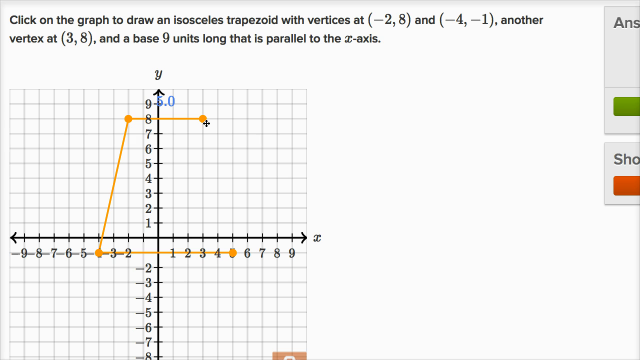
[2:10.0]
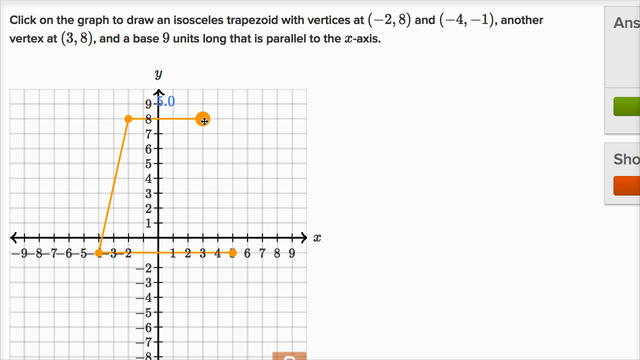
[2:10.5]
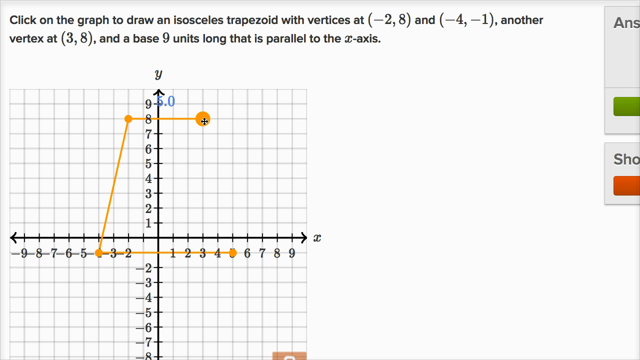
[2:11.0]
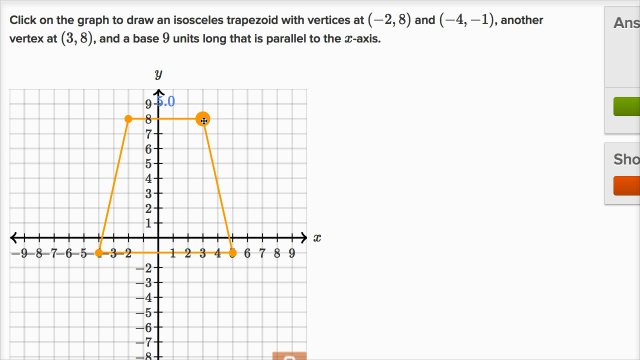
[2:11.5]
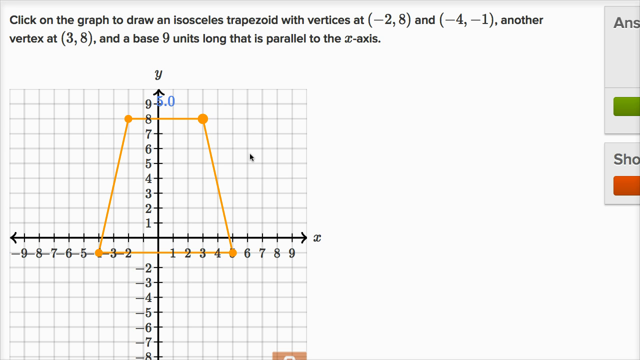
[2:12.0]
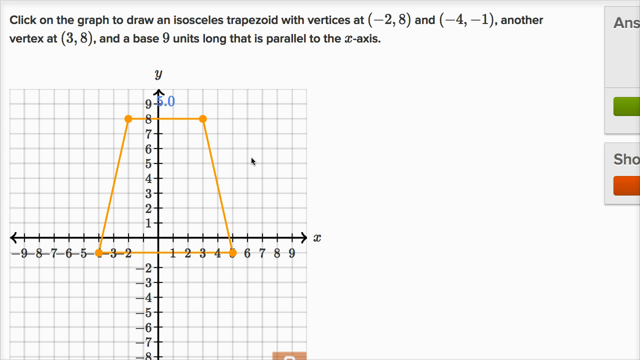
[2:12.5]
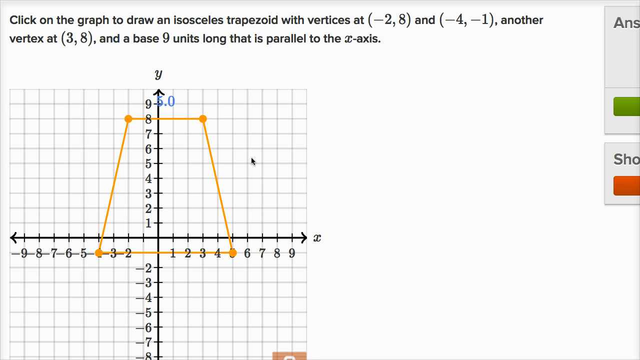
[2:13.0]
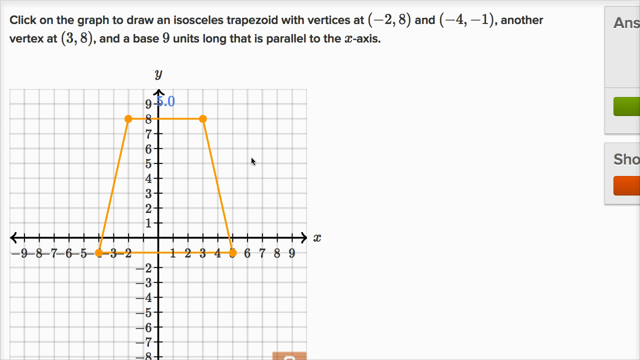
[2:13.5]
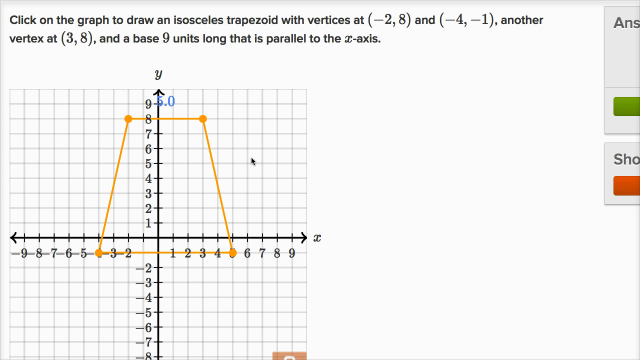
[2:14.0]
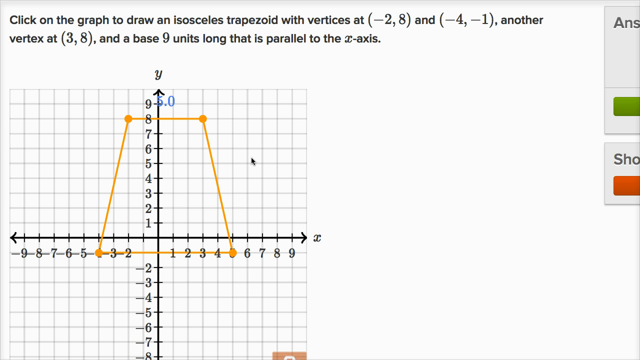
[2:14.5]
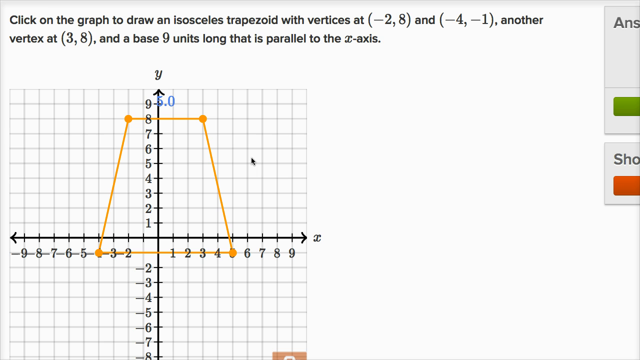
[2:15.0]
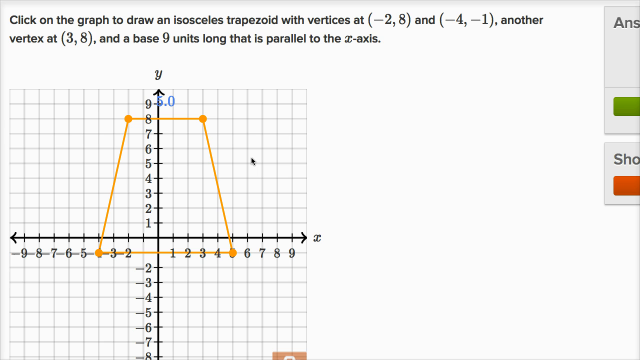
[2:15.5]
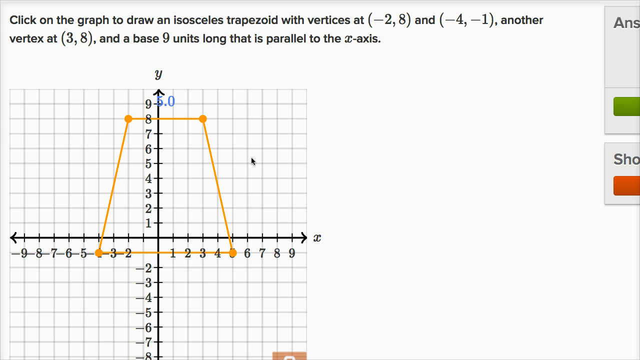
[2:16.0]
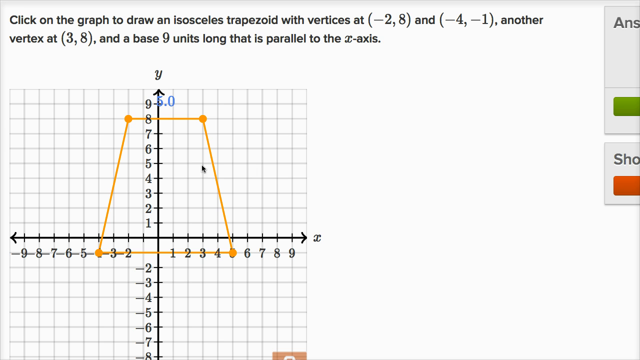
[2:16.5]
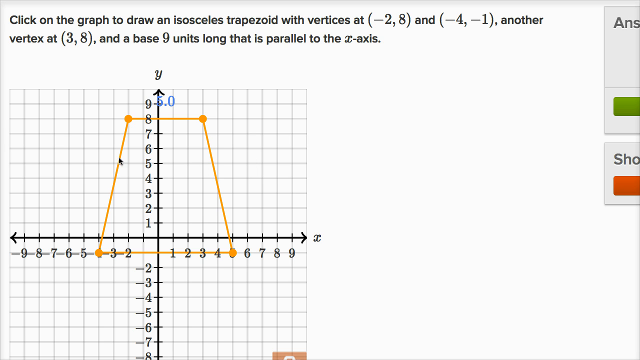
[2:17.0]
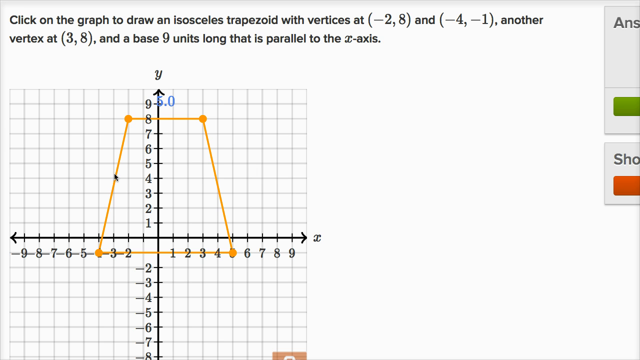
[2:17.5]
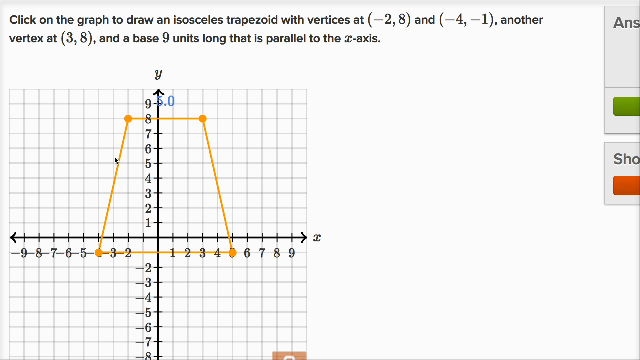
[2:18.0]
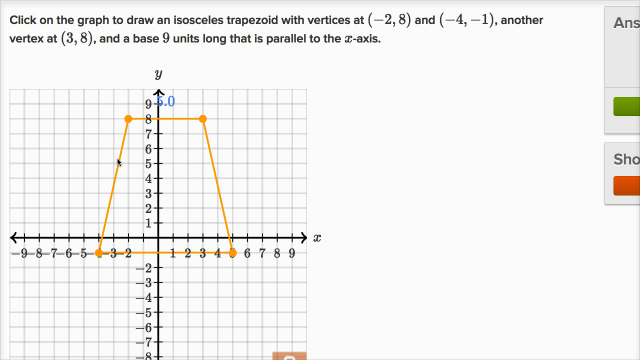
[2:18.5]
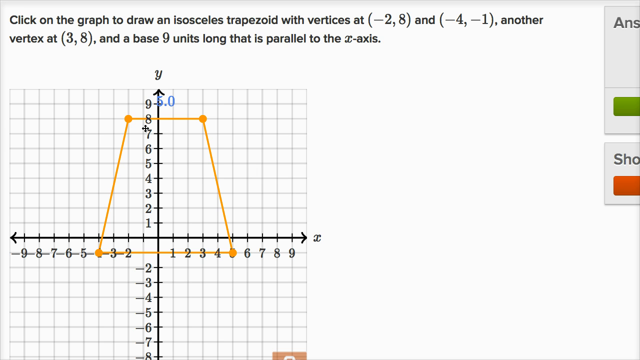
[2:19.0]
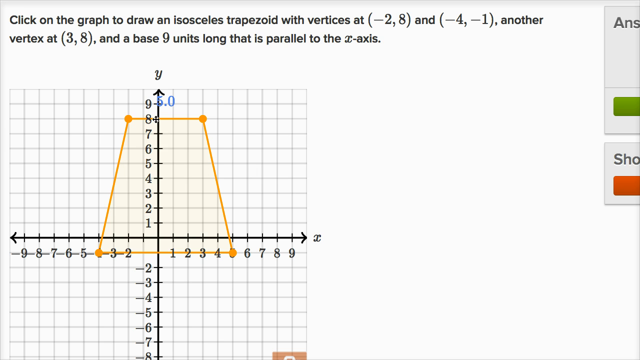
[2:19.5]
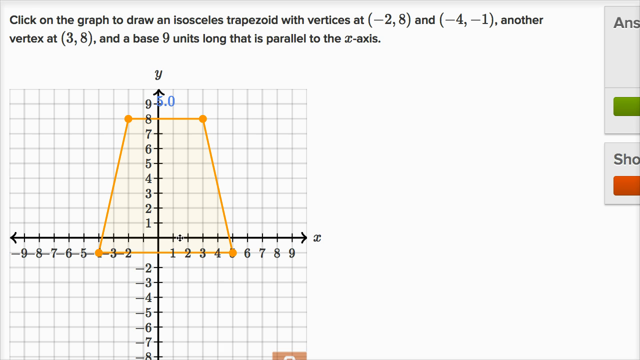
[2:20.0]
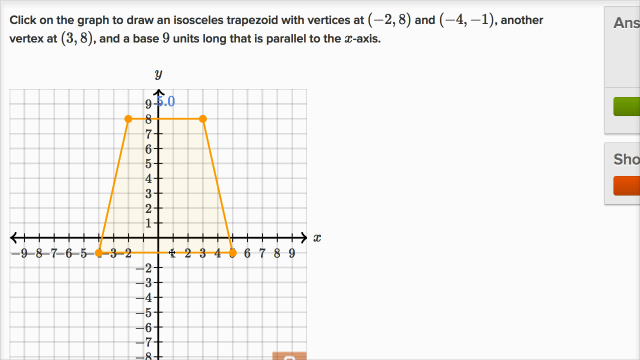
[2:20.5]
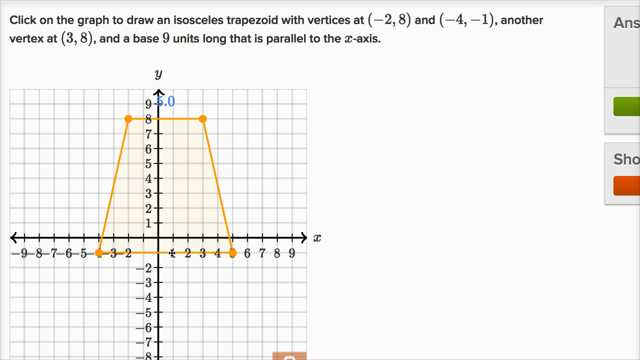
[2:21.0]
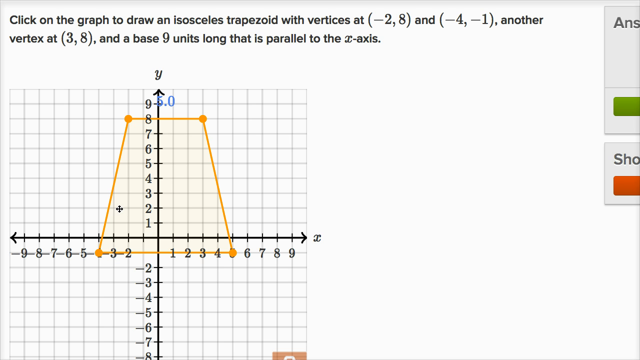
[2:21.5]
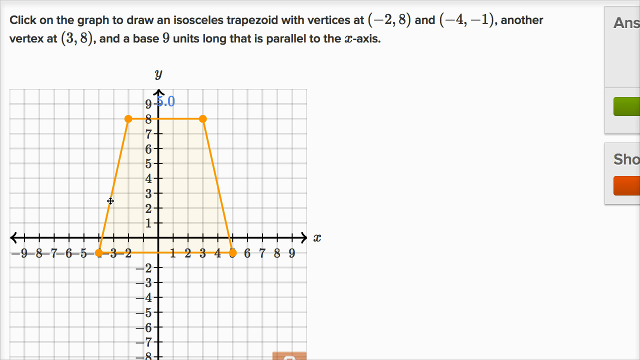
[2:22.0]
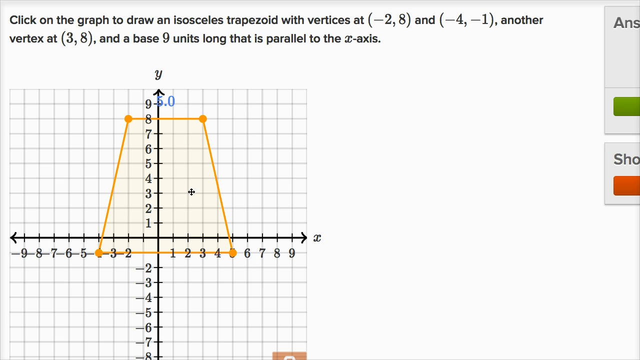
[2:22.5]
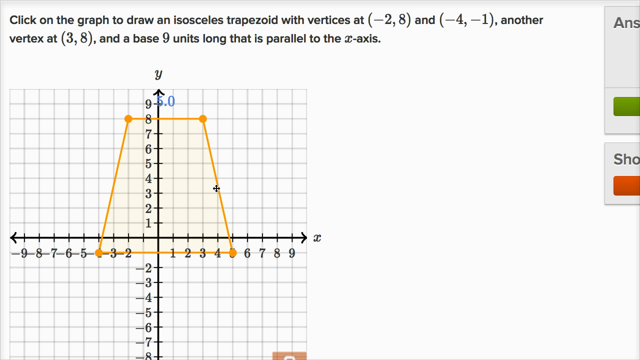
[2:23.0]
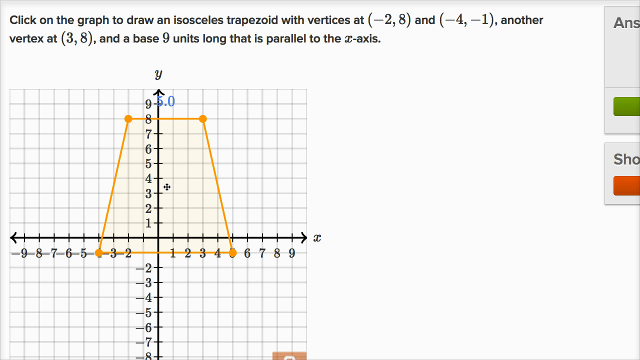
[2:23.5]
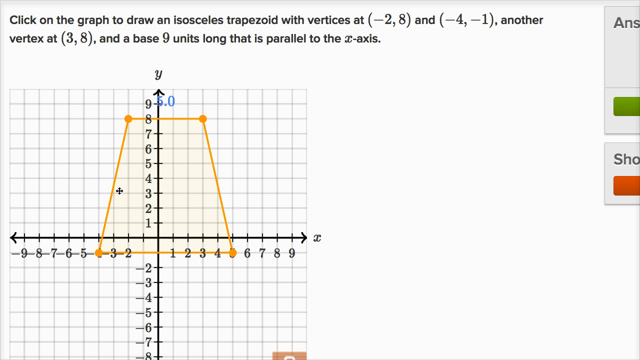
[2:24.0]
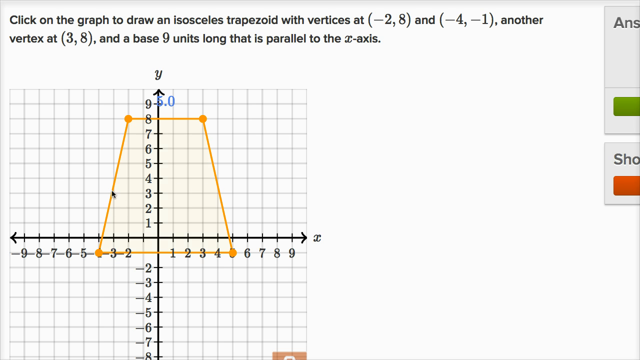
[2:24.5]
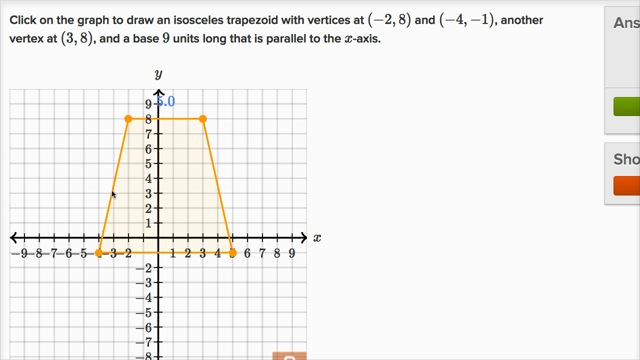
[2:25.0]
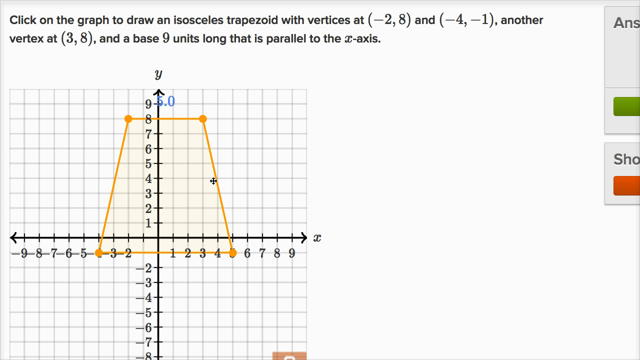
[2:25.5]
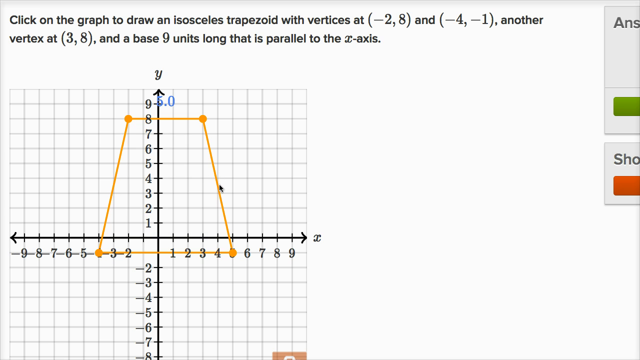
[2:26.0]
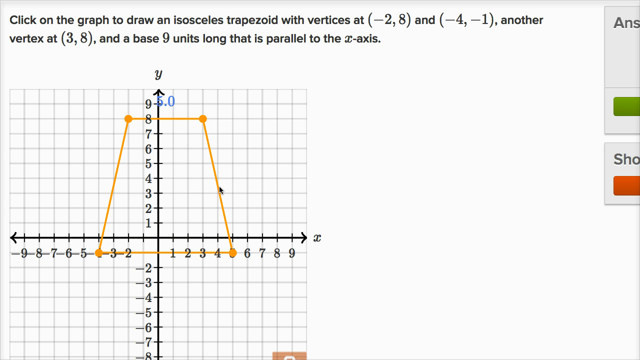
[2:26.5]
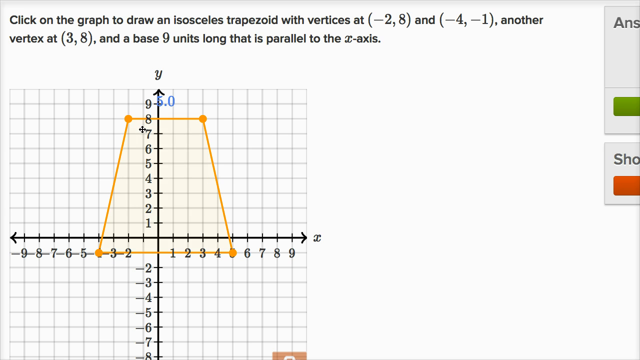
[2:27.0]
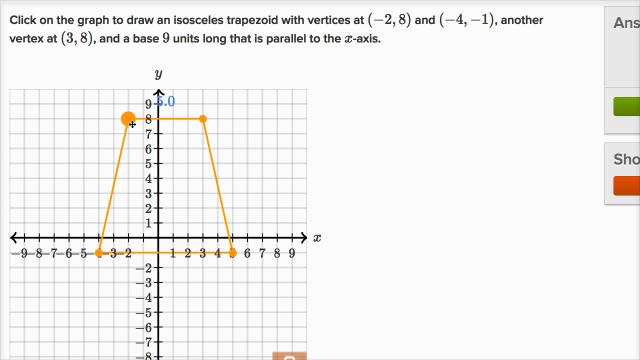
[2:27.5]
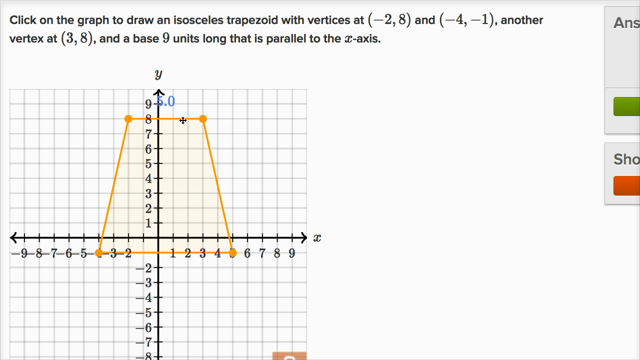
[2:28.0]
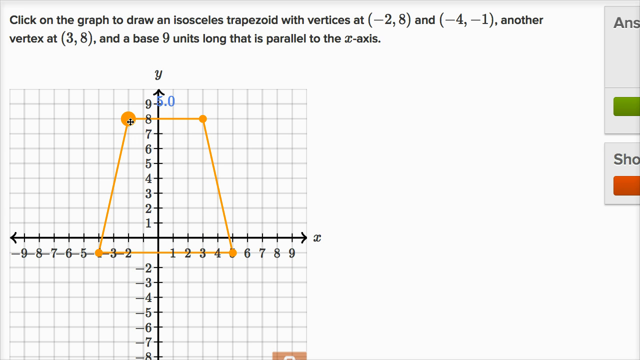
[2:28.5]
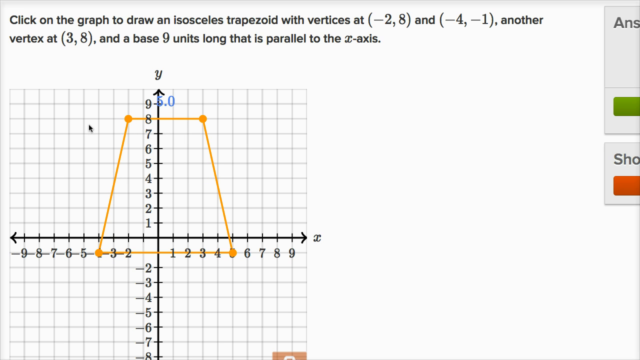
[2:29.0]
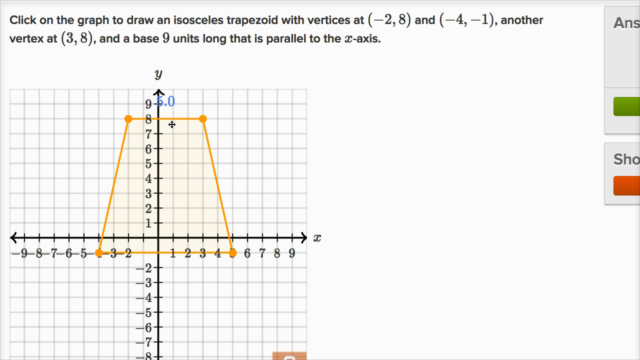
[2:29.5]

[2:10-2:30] The line on the 8 starts three small blocks away. The line goes straight up to 8, skips one block, then goes straight down to number 4. It then moves to the right, passes the vertical line, and reaches the fifth number. From the 8 where it started, another line is drawn straight down to the fifth number.